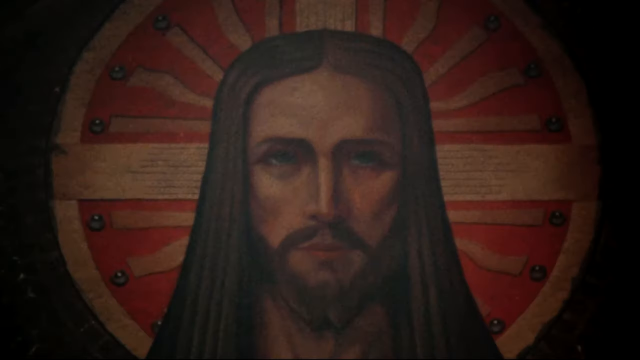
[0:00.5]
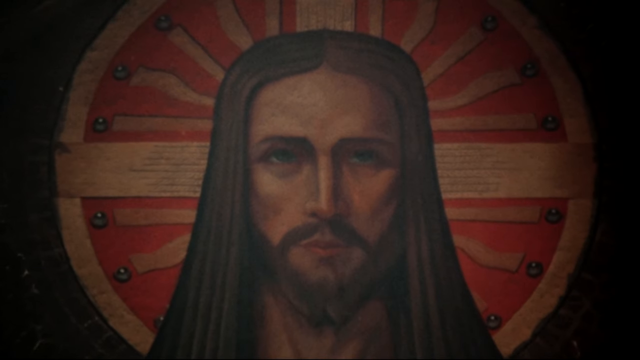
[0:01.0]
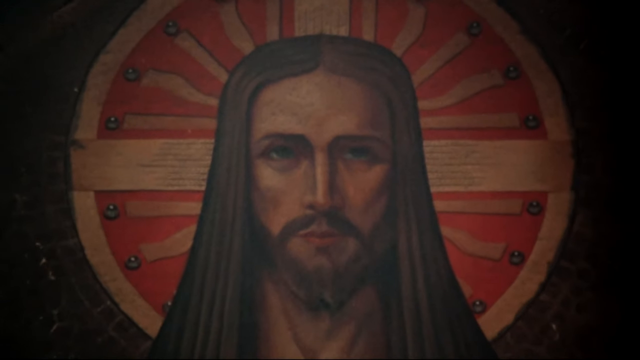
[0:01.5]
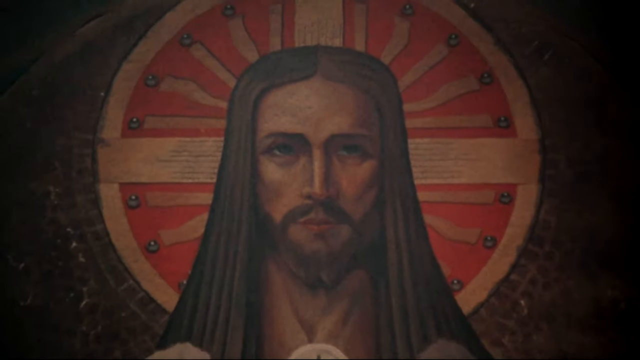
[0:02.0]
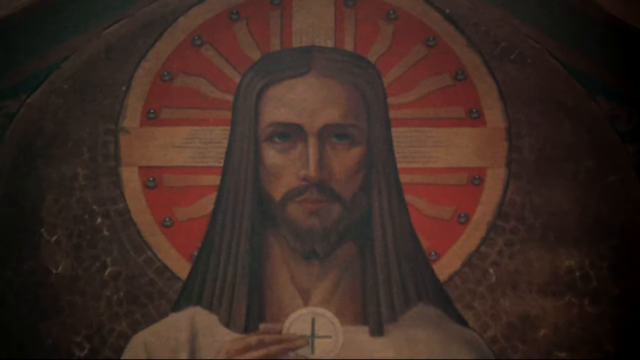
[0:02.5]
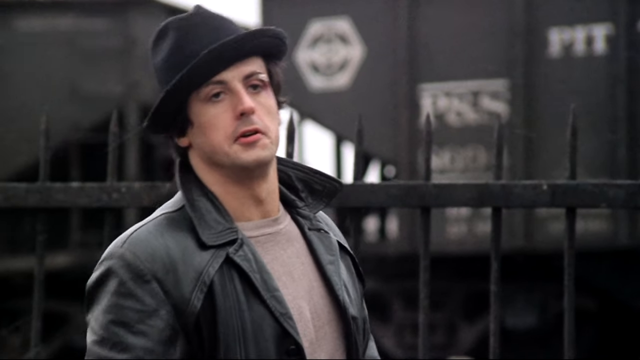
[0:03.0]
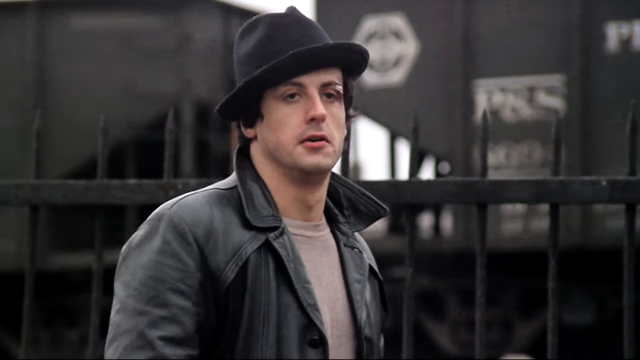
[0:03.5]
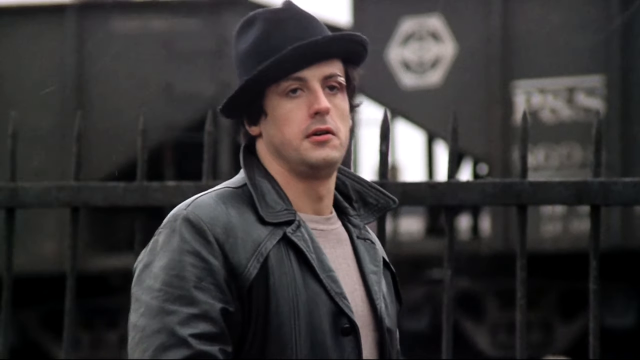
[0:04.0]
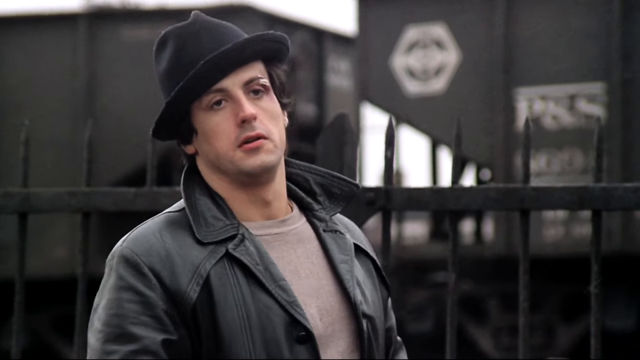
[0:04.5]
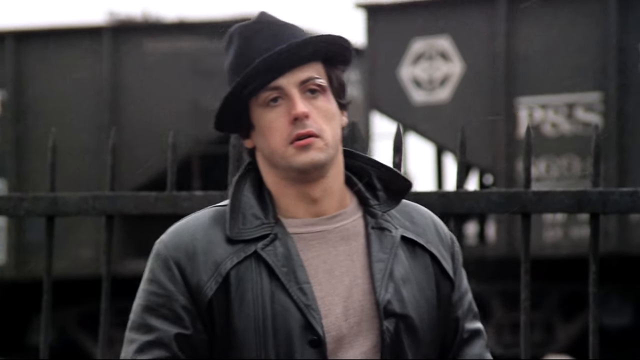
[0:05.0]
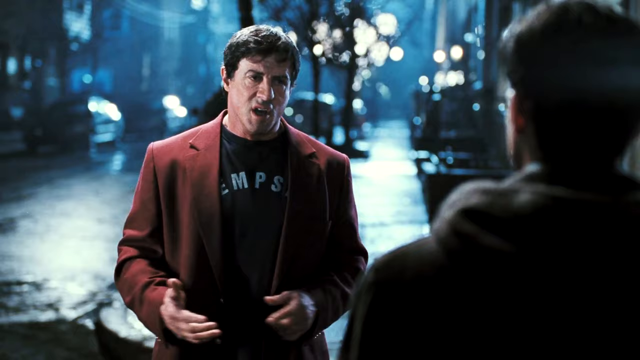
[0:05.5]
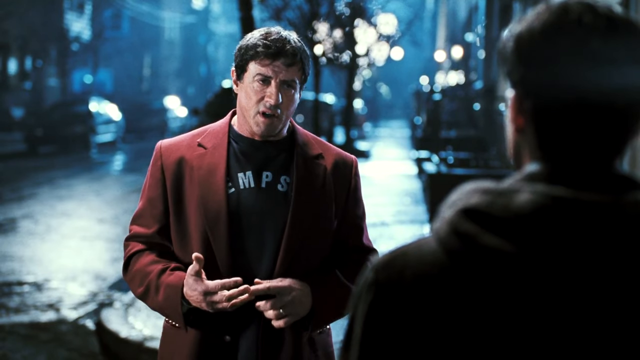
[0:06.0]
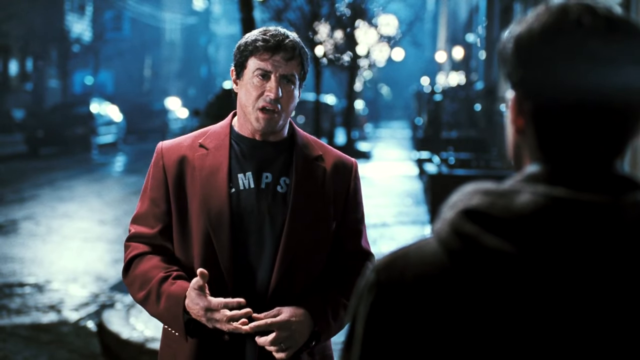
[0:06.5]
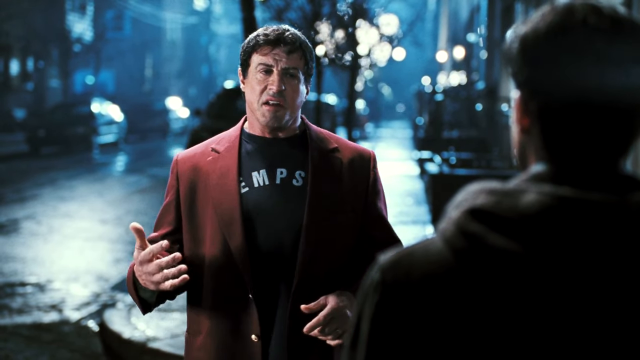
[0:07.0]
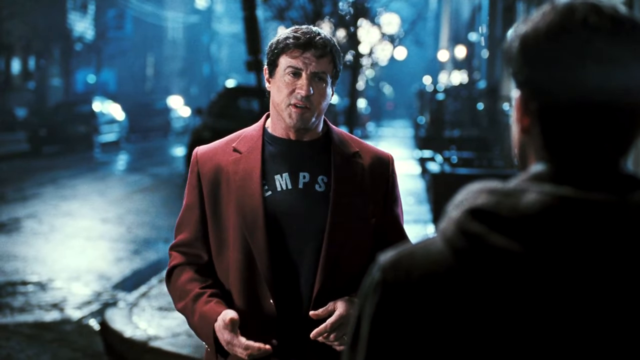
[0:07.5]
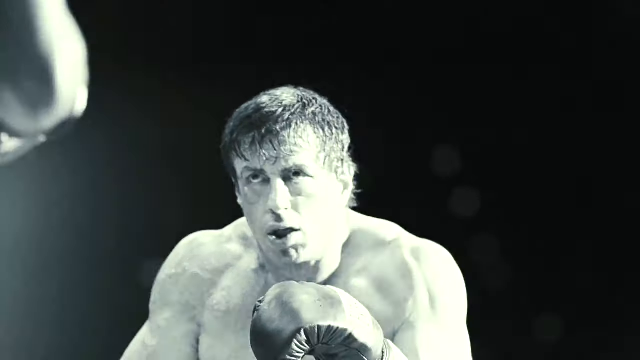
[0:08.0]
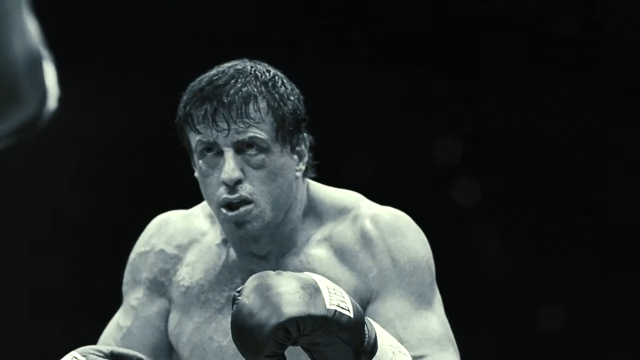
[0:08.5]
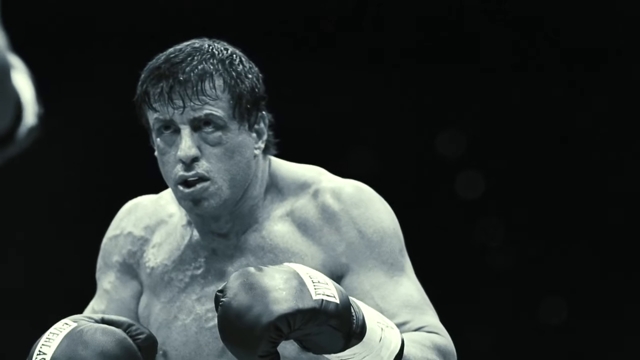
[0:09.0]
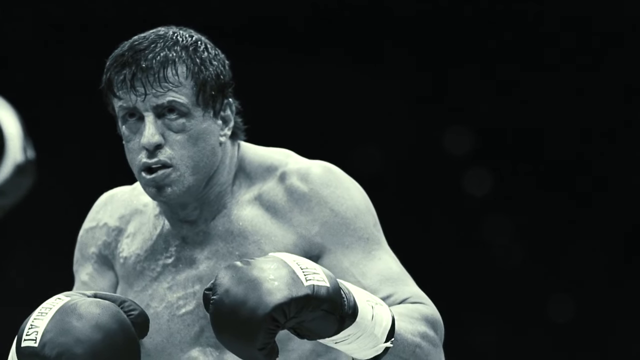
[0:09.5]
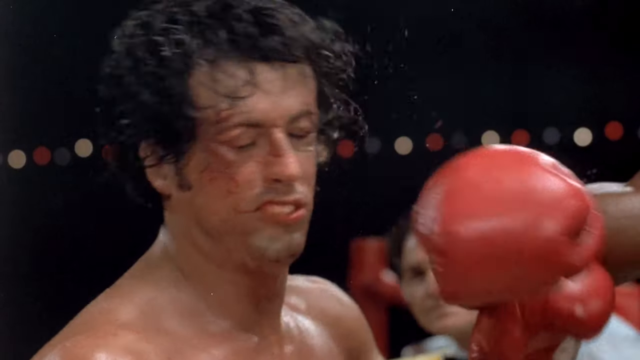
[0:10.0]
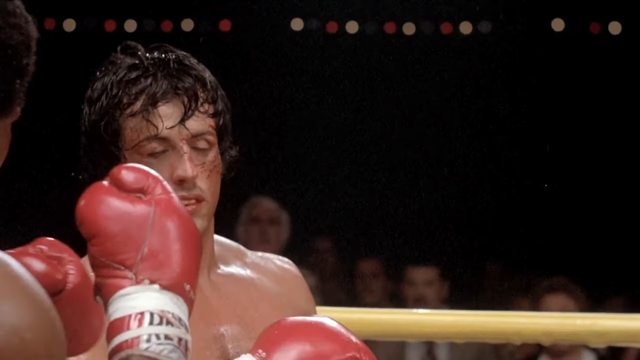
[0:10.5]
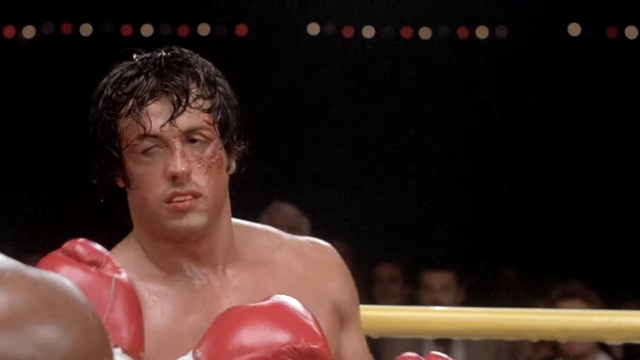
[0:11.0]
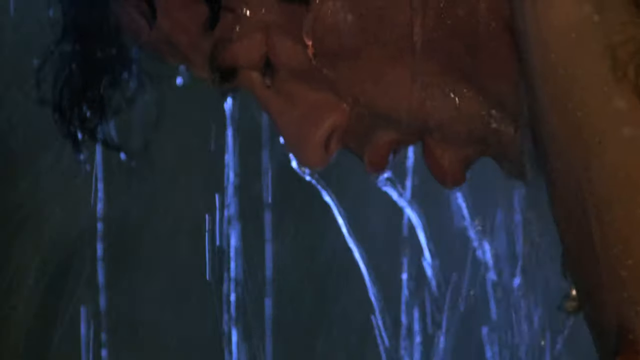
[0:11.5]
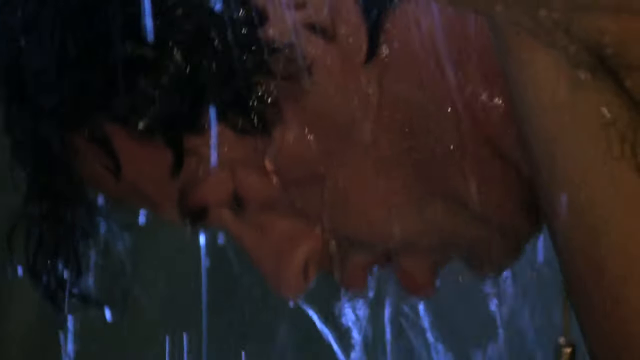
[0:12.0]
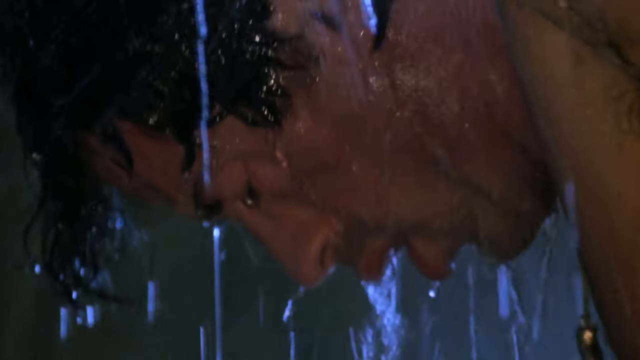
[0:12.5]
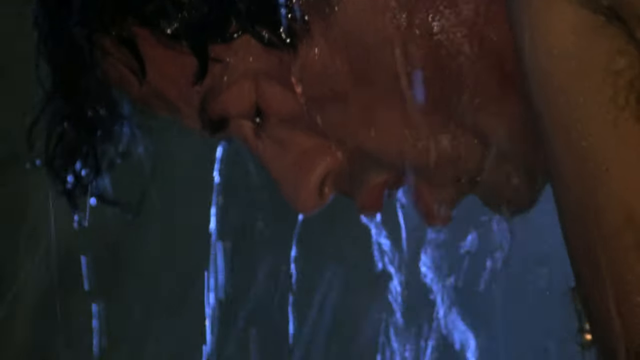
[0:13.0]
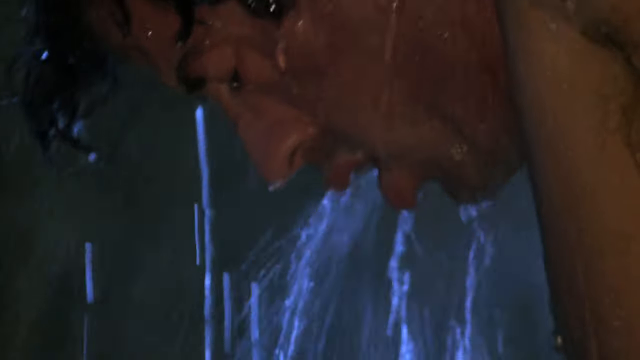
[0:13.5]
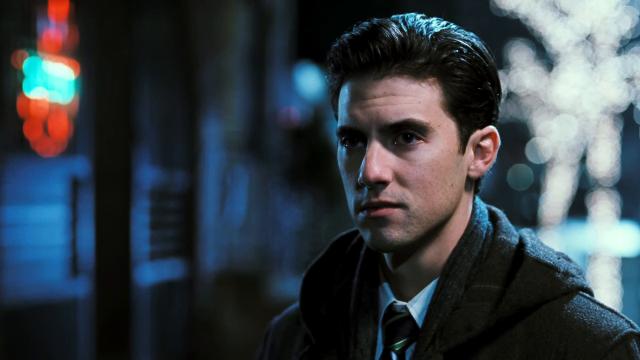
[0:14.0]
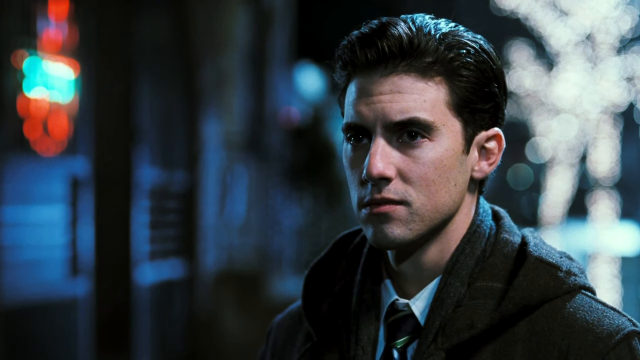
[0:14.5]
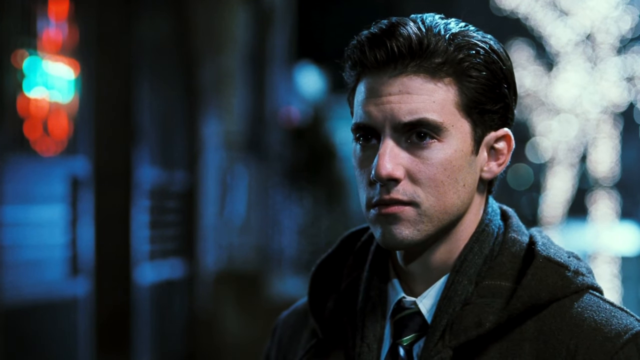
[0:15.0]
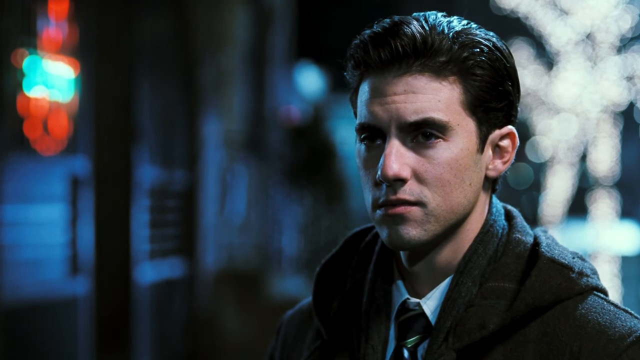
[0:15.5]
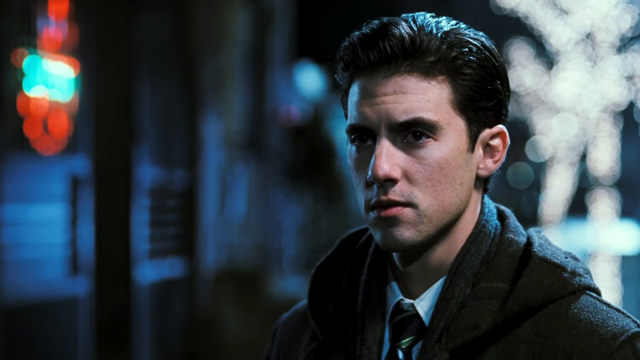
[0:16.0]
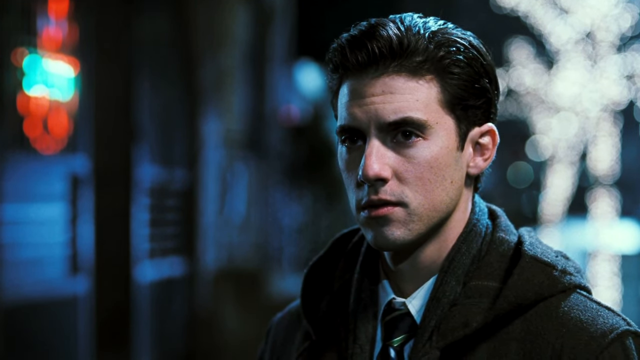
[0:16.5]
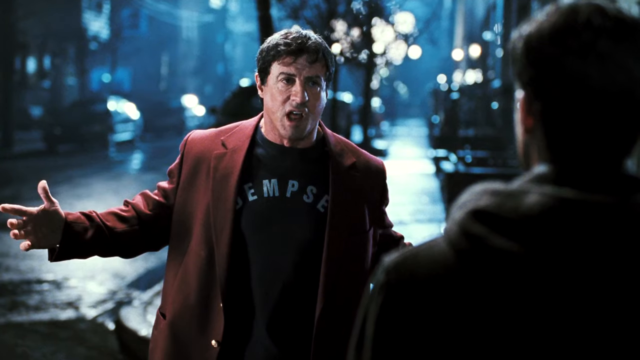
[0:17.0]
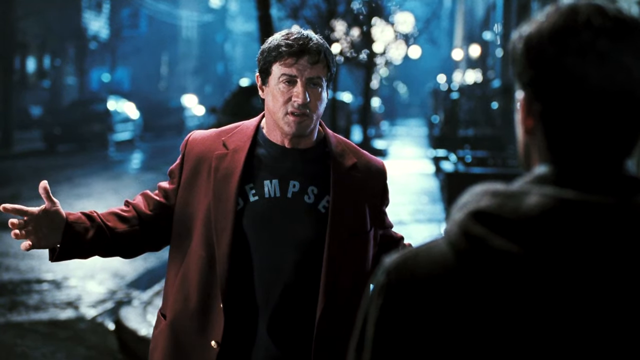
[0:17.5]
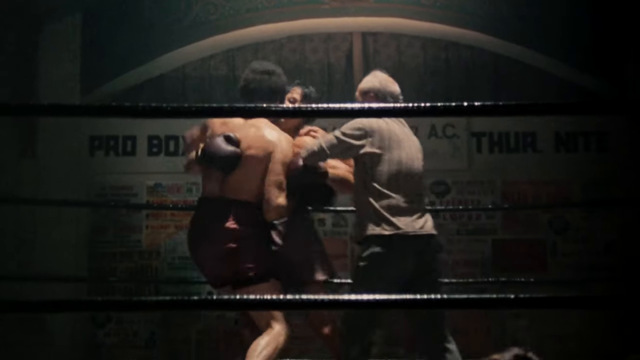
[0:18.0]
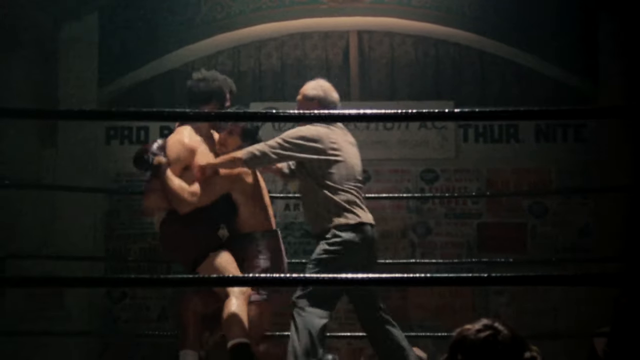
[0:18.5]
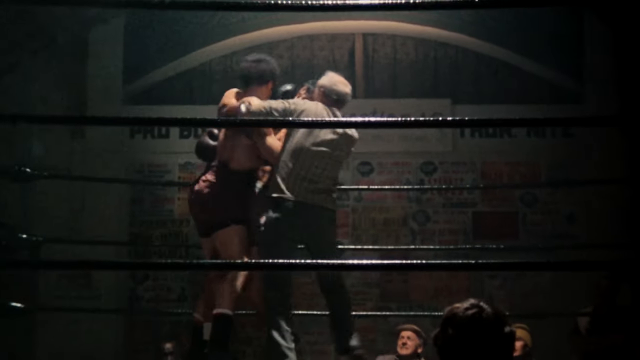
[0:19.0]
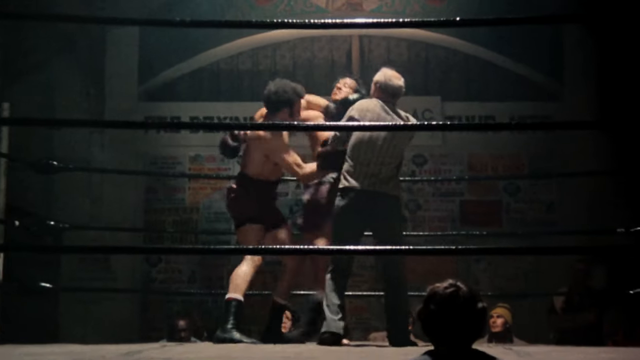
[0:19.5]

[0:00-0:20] The video opens with a portrait picture of Giza, then shows a man outside, curiously looking. The focus moves to this man, who wears a cap and a black jacket and is standing there looking, while another man in a red suit or red coat talks to him. Two men then fight in what looks like a boxing ring and a boxing match; one of them is the man shown earlier, and a referee tries to separate them. The footage starts in black and white and then shifts to the original colour. Different scenes show the man trying to express himself.